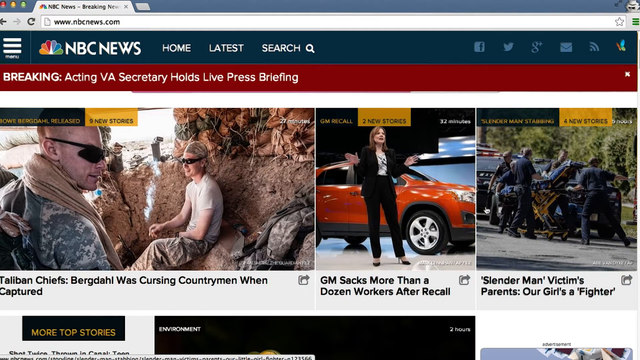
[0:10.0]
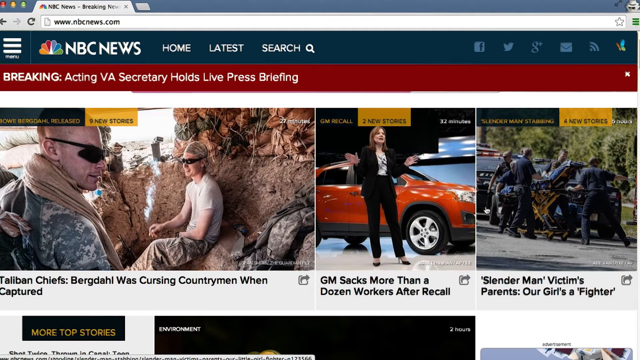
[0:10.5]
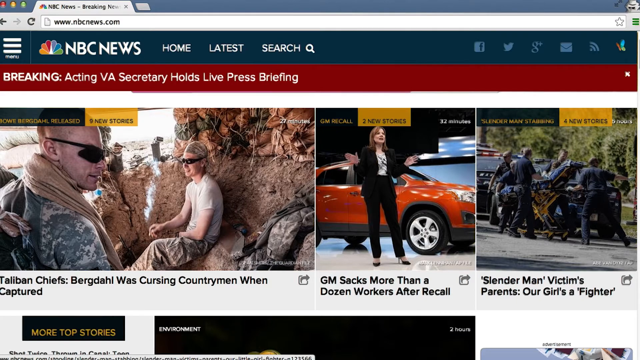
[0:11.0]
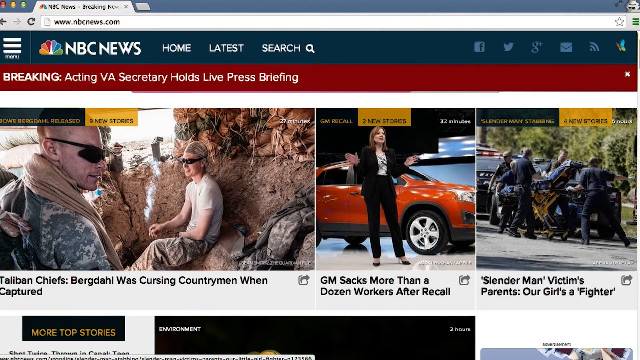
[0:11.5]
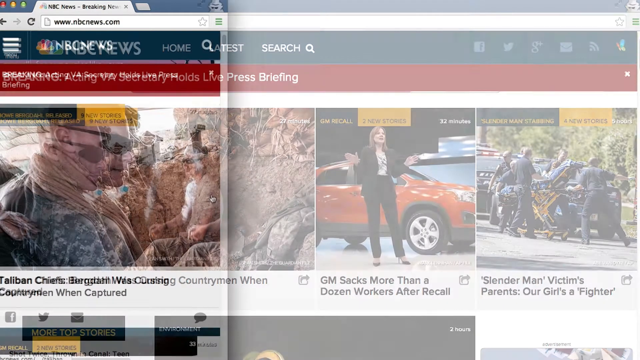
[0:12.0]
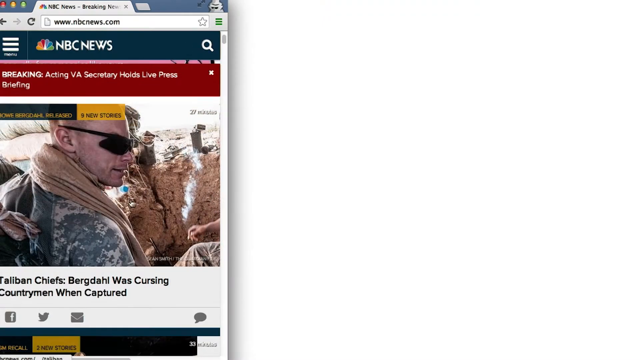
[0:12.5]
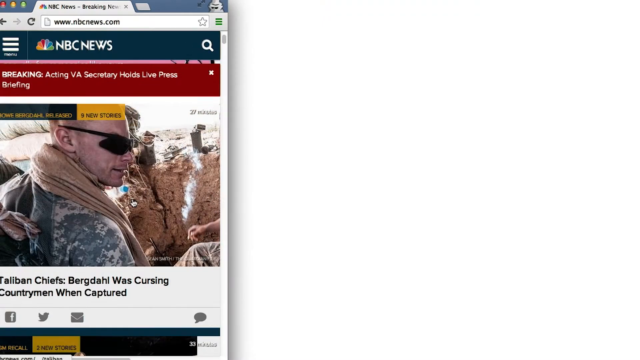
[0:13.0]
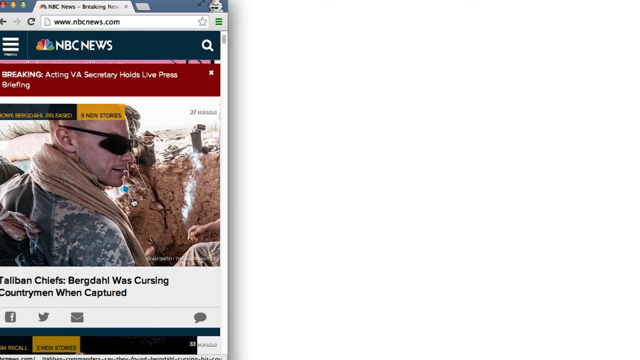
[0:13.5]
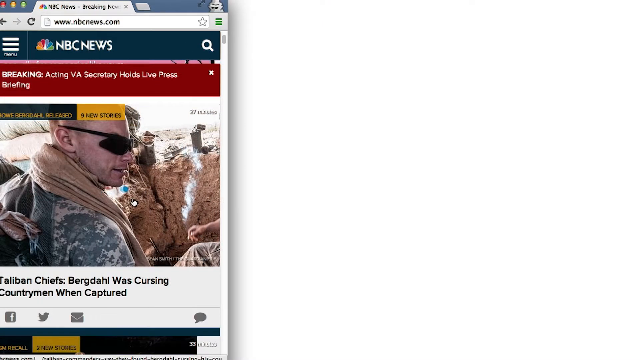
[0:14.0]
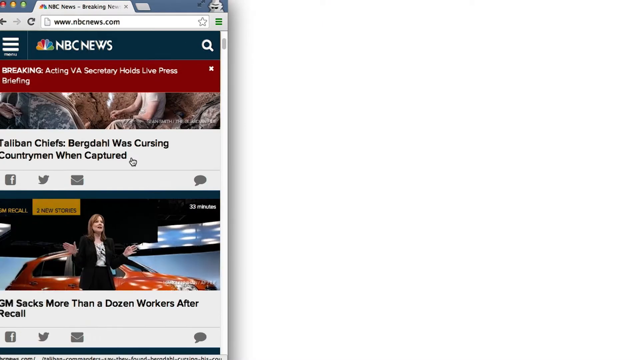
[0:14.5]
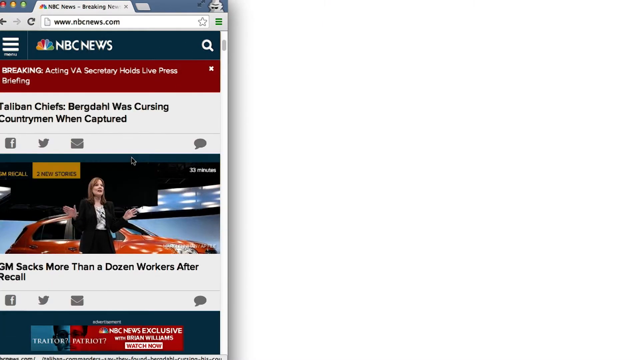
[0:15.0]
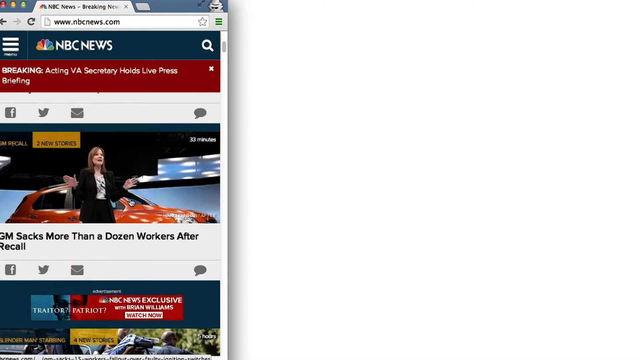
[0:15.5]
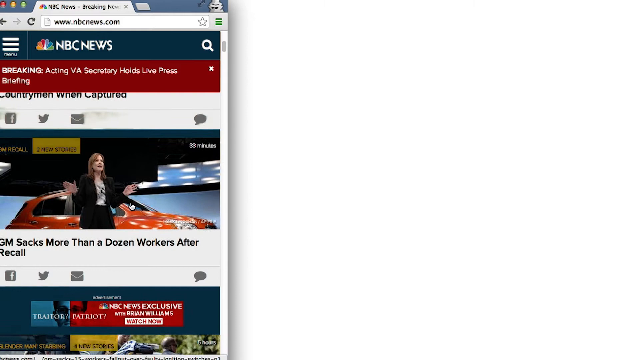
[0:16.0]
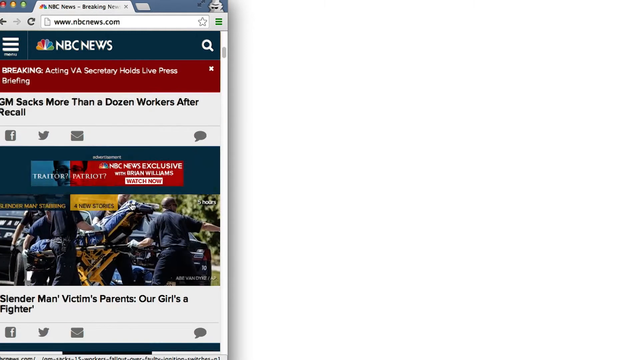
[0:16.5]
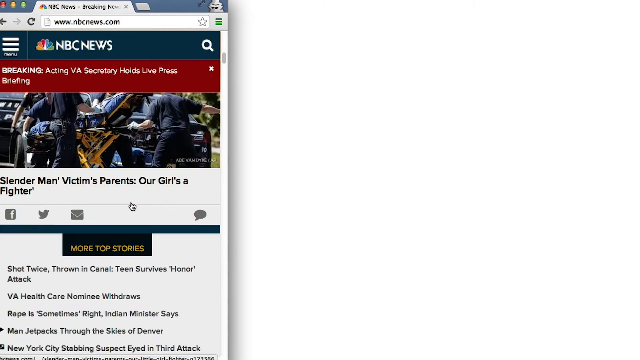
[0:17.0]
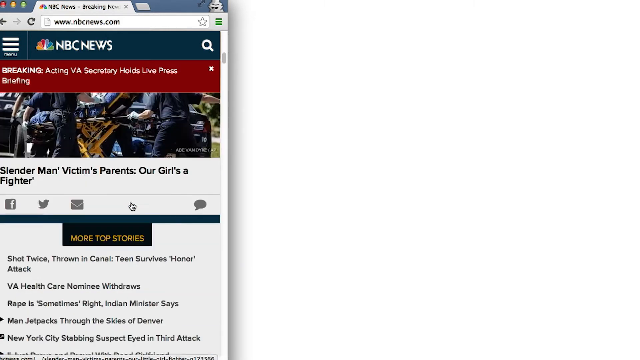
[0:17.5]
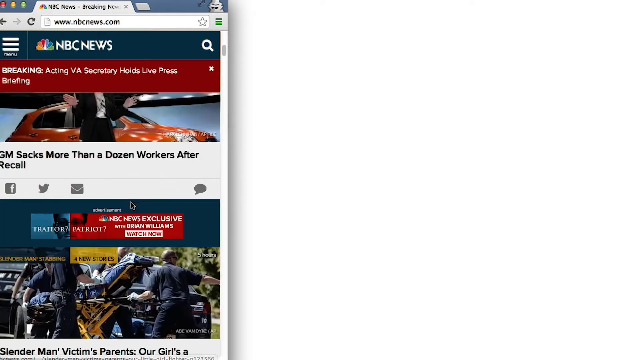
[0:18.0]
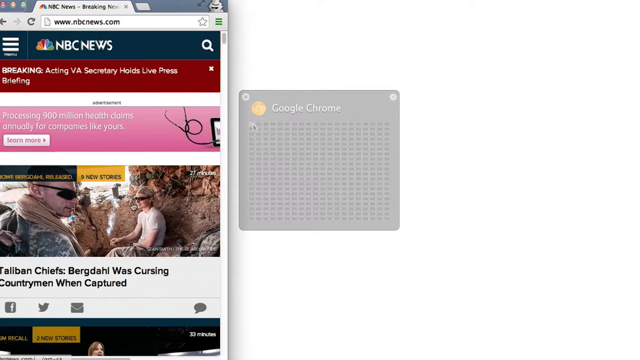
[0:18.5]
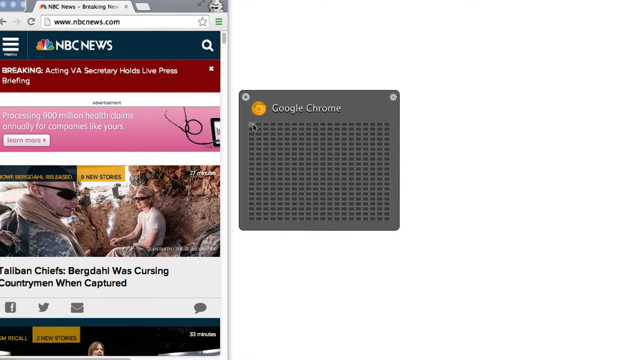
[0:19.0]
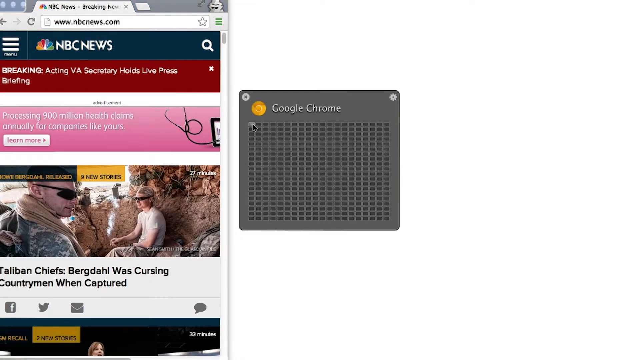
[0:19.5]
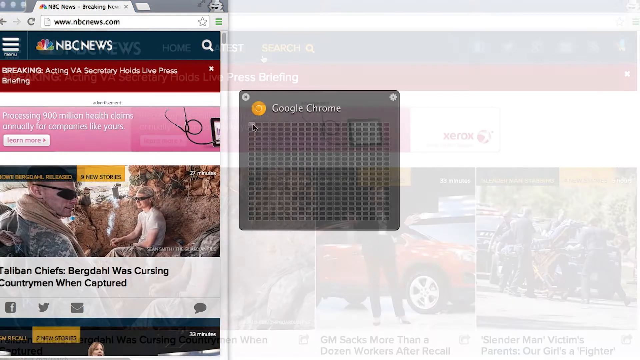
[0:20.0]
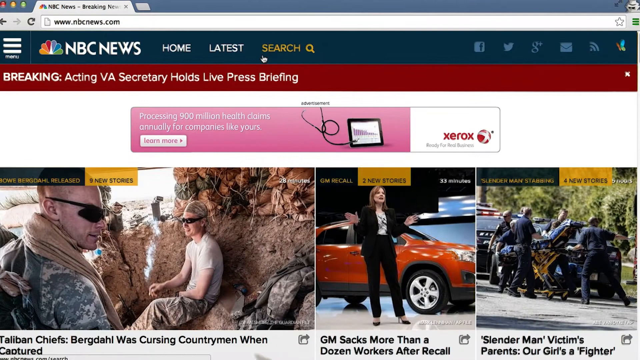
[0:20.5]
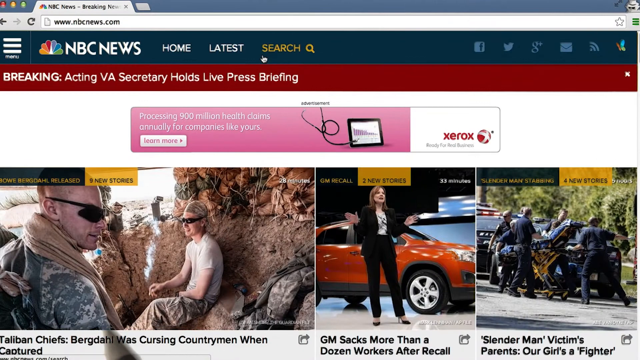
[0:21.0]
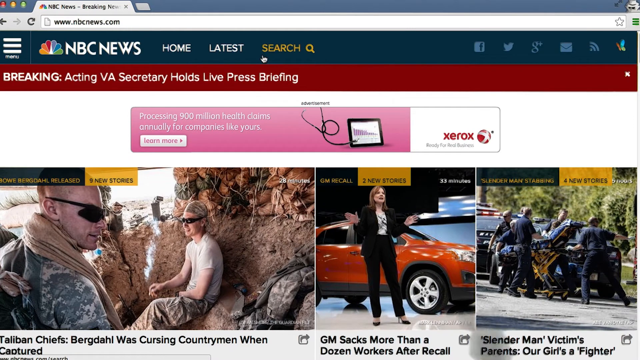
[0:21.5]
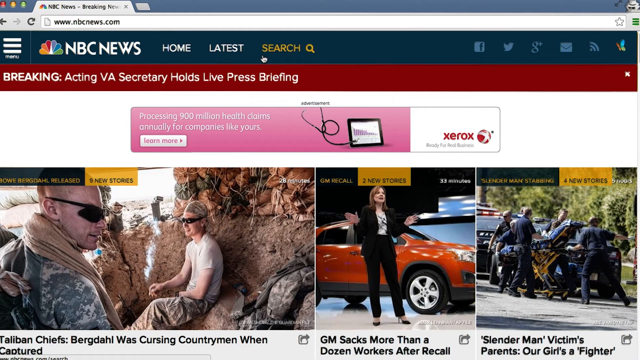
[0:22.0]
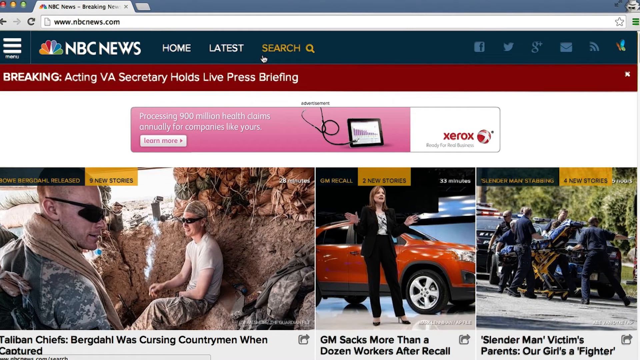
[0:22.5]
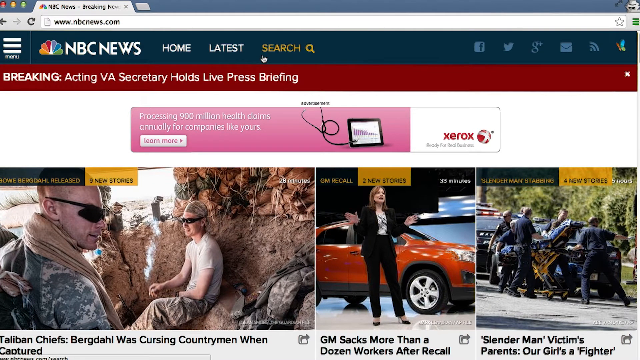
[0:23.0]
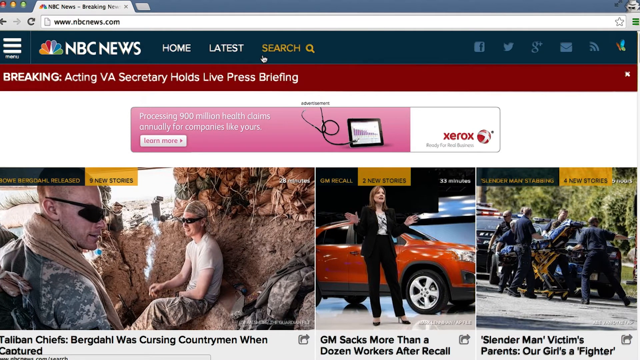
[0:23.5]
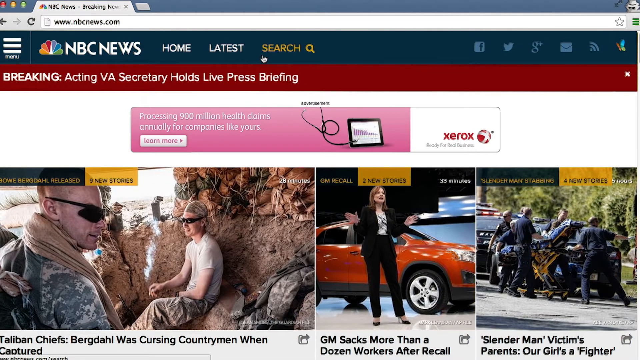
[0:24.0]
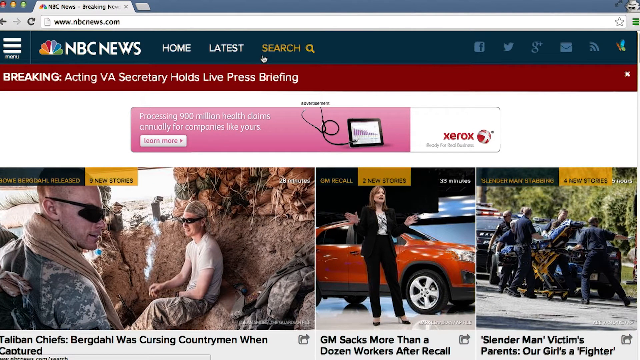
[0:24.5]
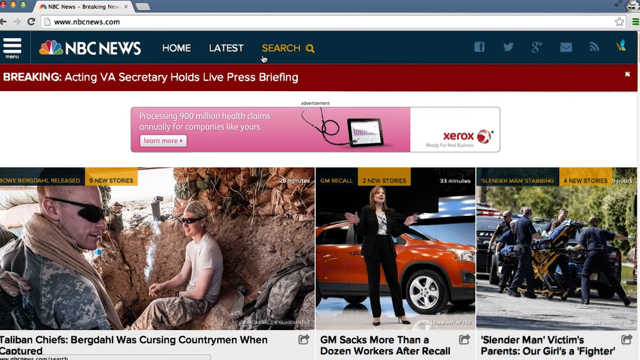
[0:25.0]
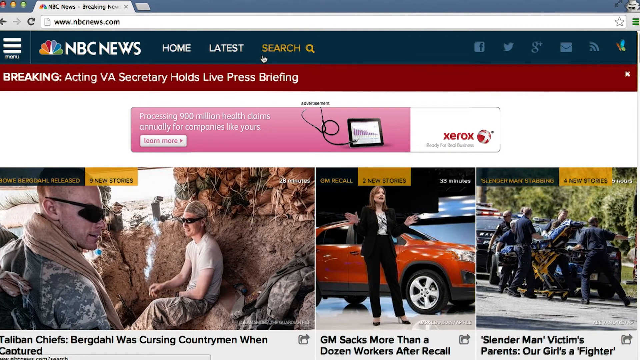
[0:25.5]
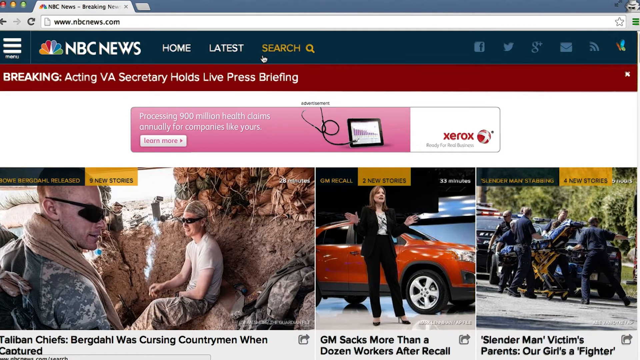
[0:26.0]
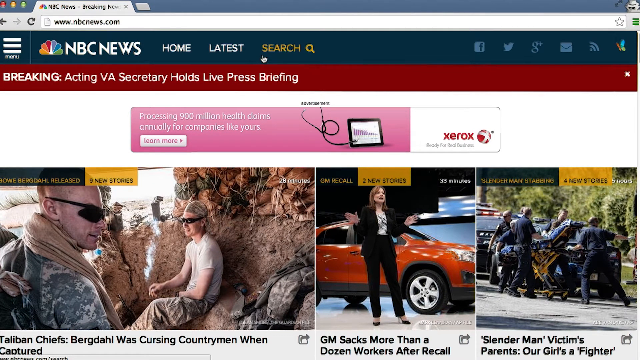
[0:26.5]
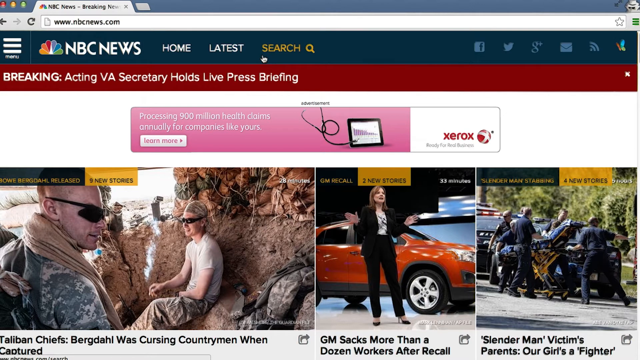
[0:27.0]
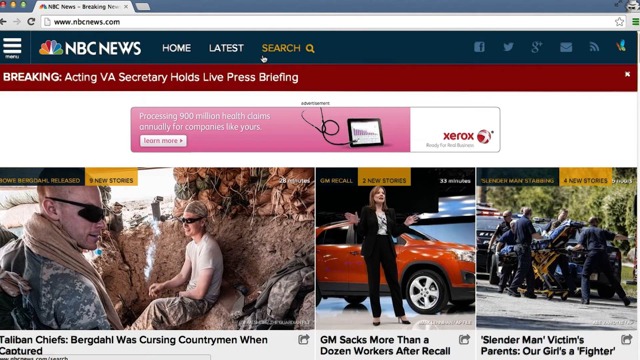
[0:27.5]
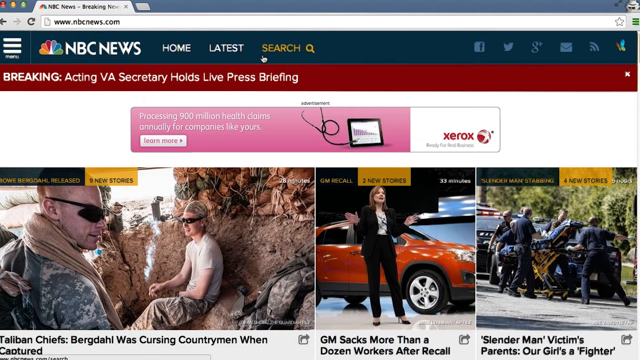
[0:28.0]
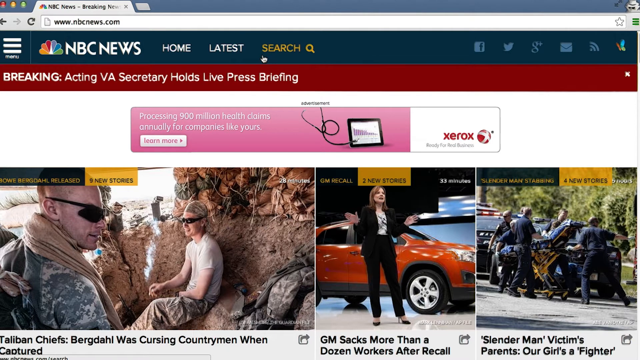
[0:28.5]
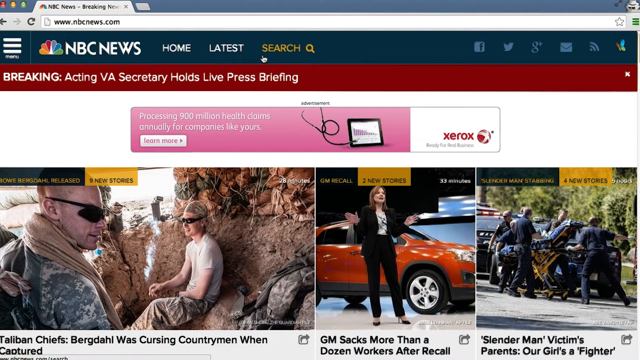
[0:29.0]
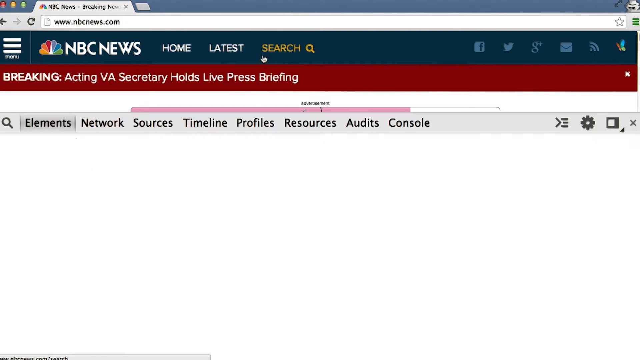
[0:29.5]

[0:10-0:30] The cursor moves and the browser window changes from maximized to a normal size, occupying only the left-hand third of the screen. At this regular size the stories are stacked on top of each other, and the cursor moves up and down. The window then returns to full screen, where the stories are side by side, and the pen comes back and points along the three stories without stopping on any of them. Mostly the window is being un-maximized and maximized again. The cursor moves a little but mostly stays put while something like a wheel scrolls the screen. At the very end, the elements tab is open, showing a lot of HTML script.